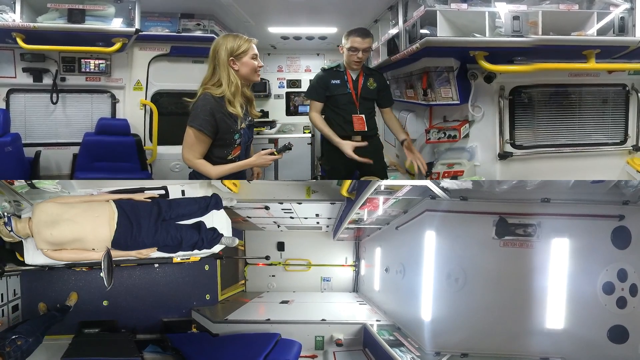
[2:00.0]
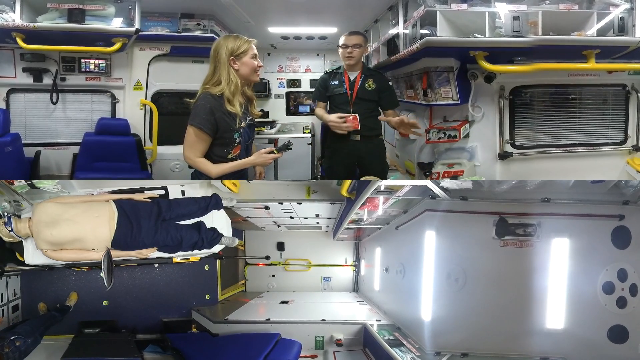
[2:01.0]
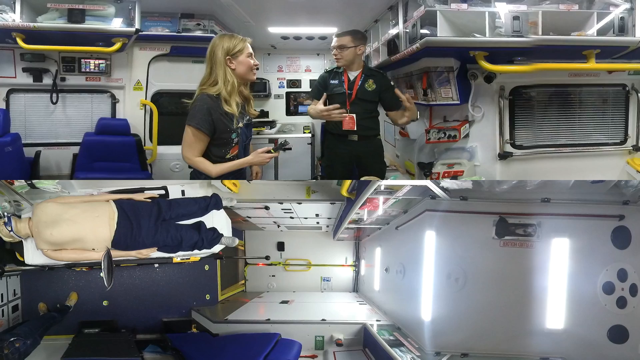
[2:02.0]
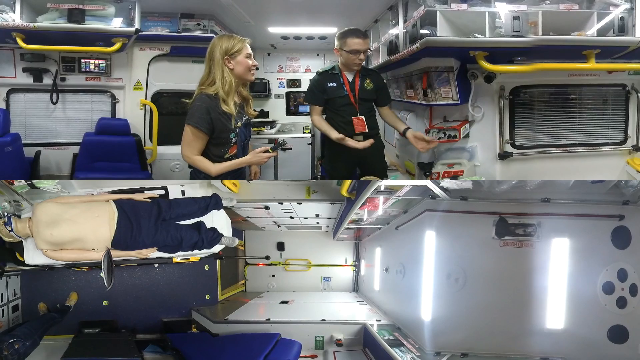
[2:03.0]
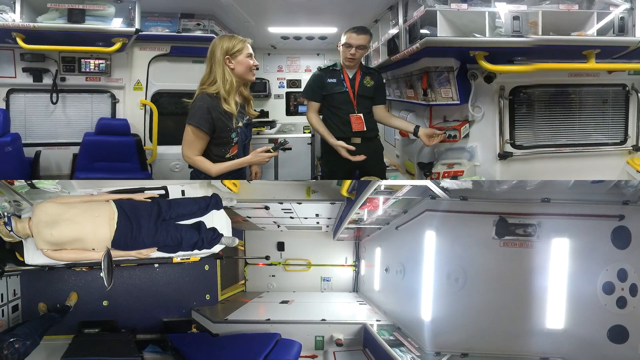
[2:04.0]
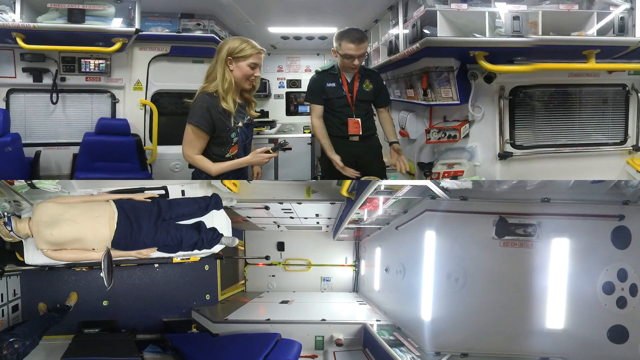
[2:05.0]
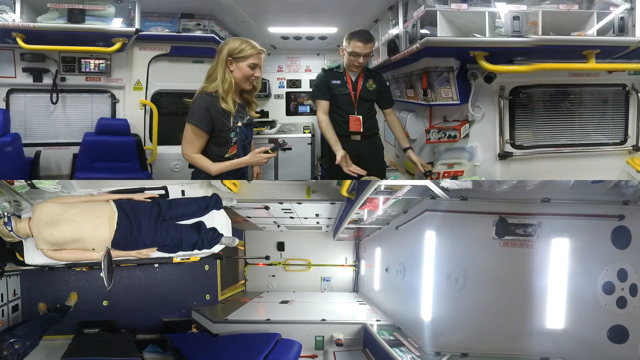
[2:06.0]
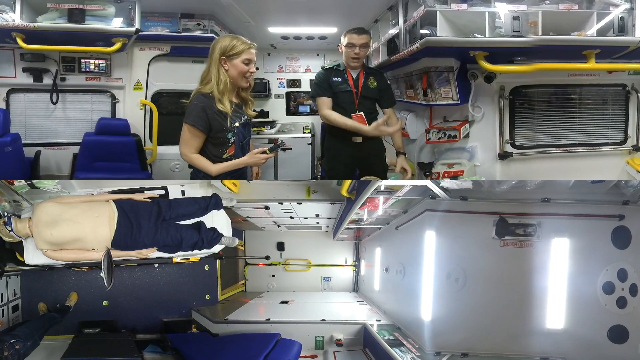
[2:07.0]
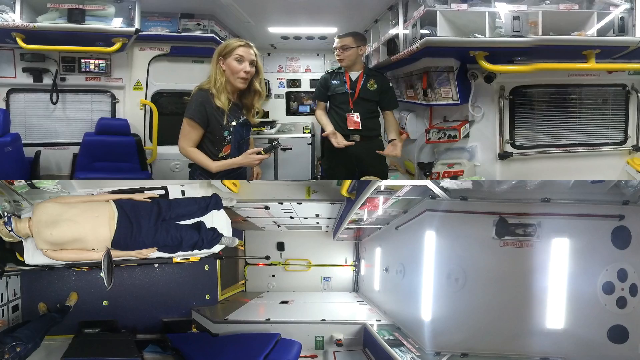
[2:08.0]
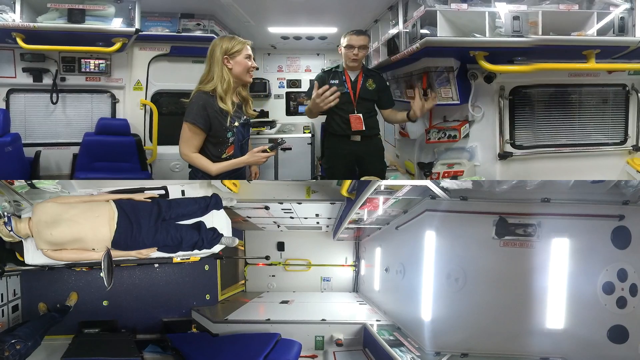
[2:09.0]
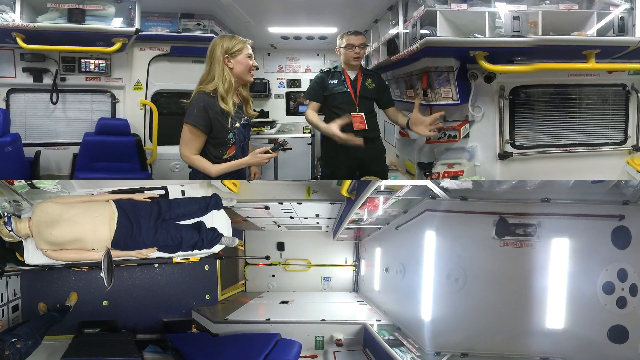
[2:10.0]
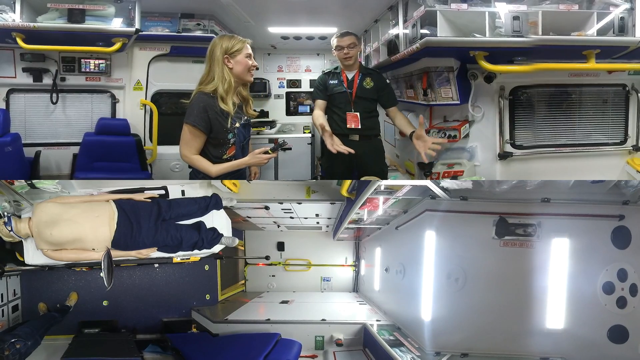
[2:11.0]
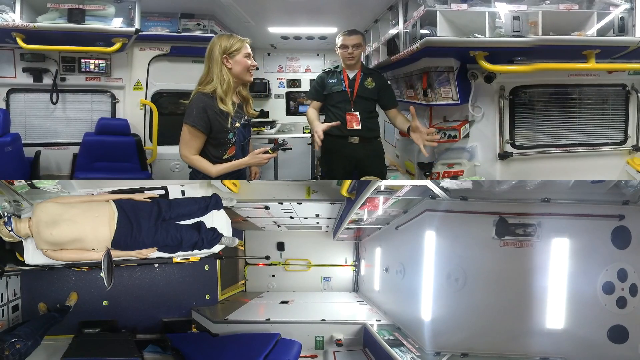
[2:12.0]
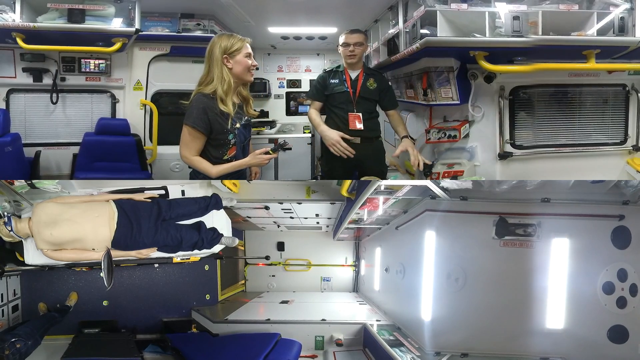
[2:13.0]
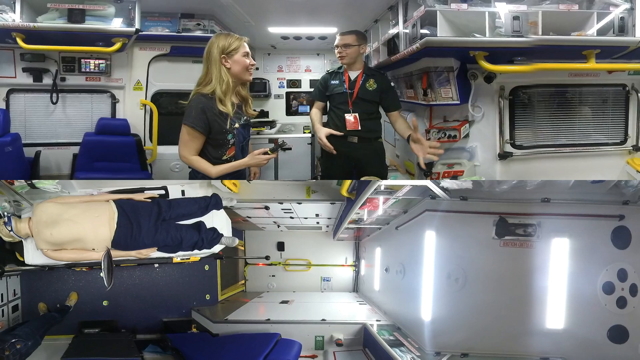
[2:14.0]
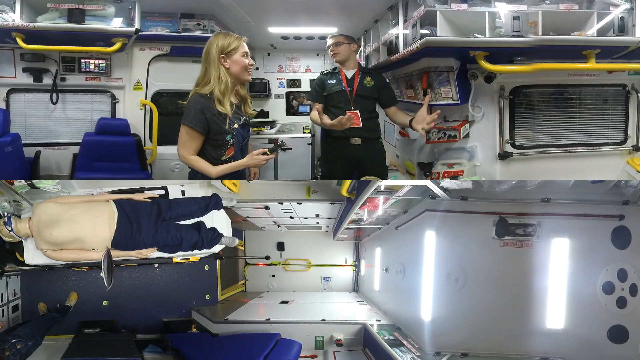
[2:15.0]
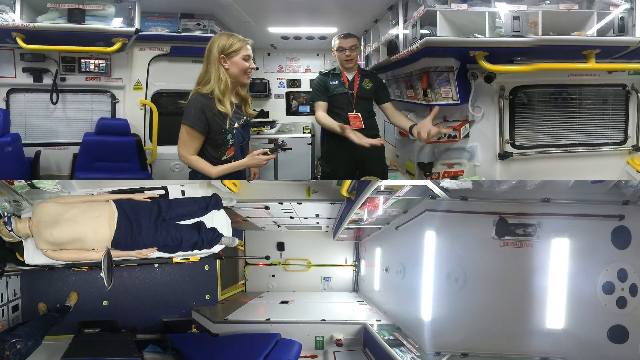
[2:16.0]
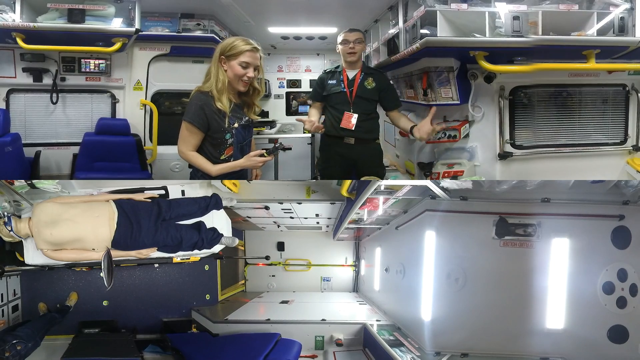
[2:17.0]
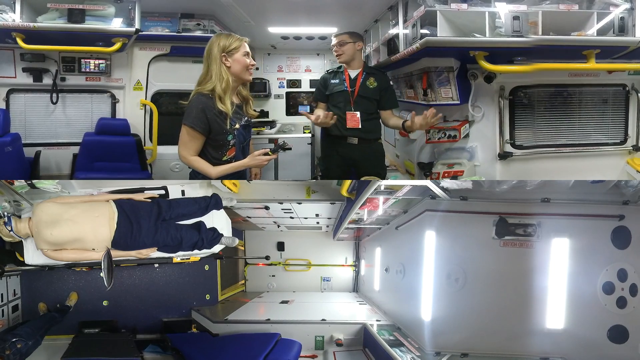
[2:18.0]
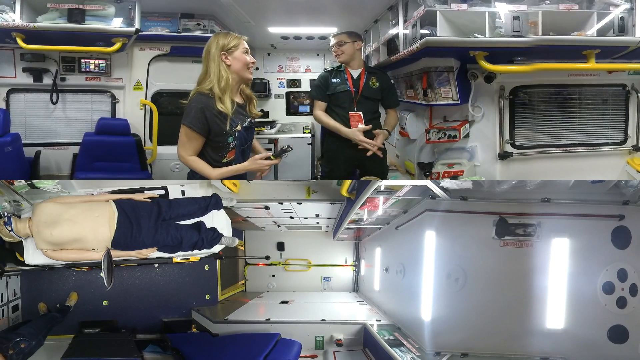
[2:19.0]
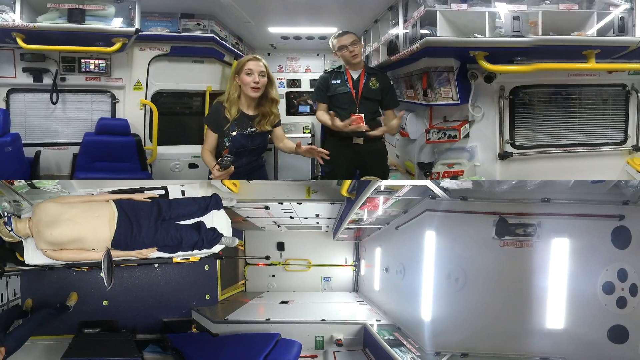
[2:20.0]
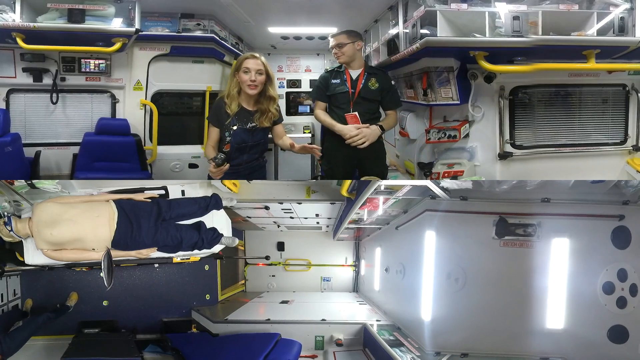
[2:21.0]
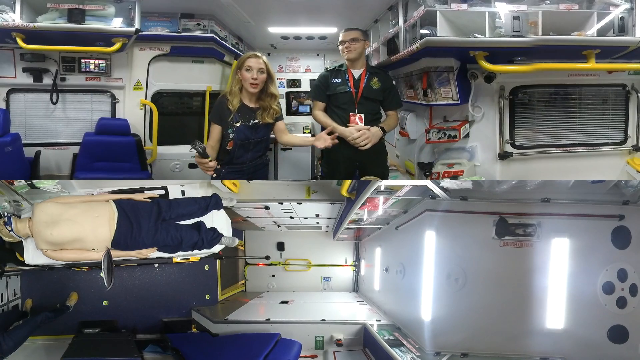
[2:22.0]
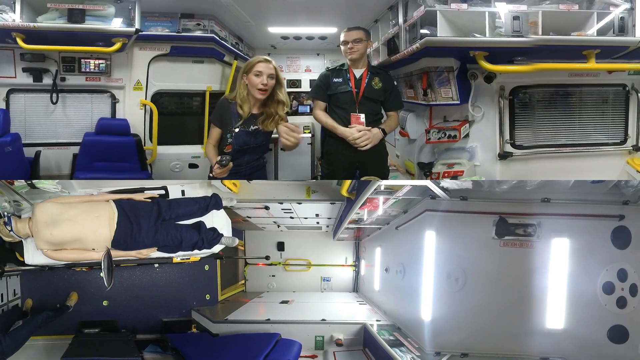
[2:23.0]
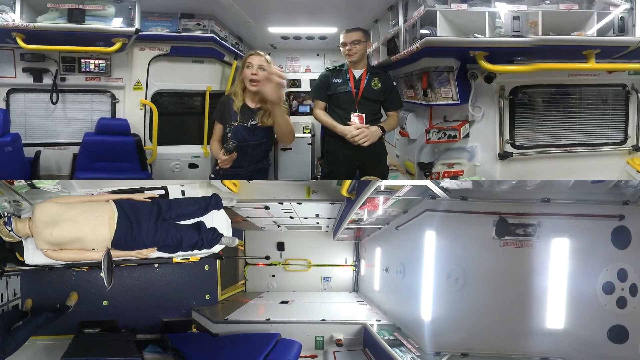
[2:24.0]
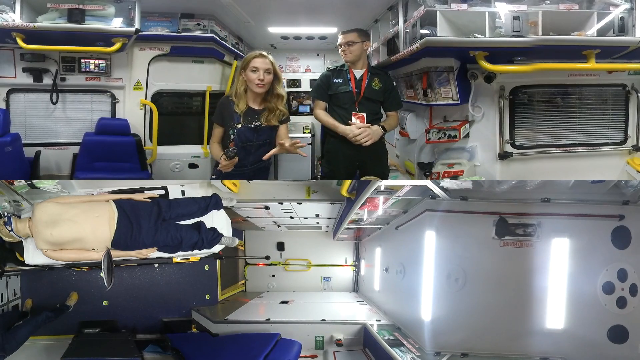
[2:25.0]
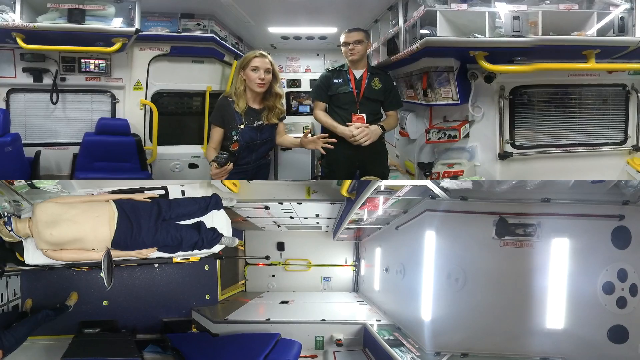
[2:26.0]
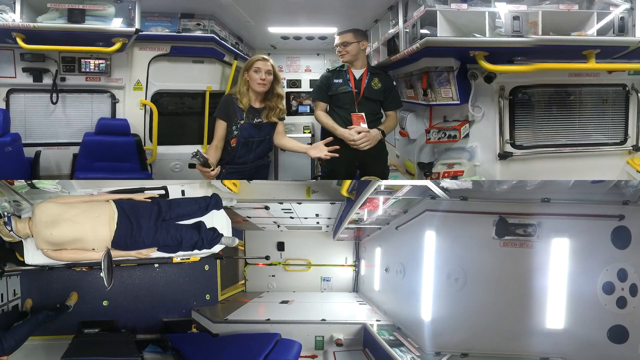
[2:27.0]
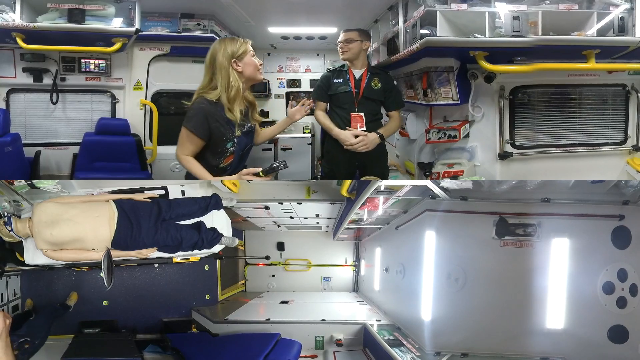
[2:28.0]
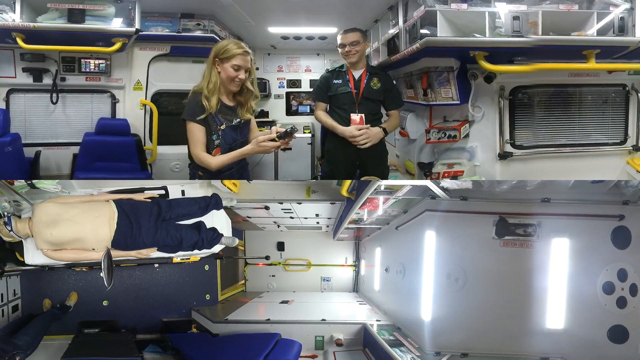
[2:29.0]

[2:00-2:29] The man is now fully focused on the dummy, standing very close behind it and using his hands a lot as he speaks to the woman. Early on he moves up a little. He places his hand slightly over the dummy but does not fully touch it. The woman responds, looking happy and smiling a bit, nodding along, then turns around, stretching her hands out while talking and whipping her hands a little; they may be getting ready to give some sort of demonstration. Both of their hands still look a little odd, appearing enlarged only when they stretch them out. The dummy is still lying the same way, with the swim mask on, apparently no shirt, navy pants and what looks like a pair of socks.